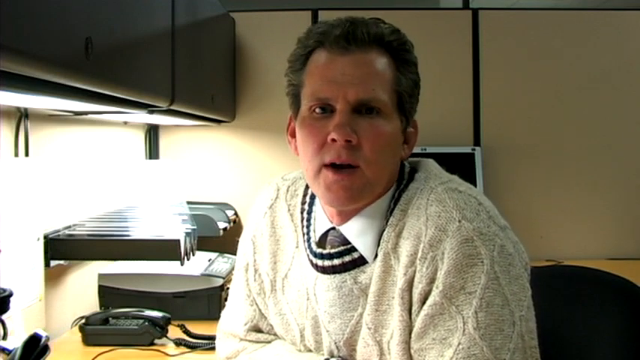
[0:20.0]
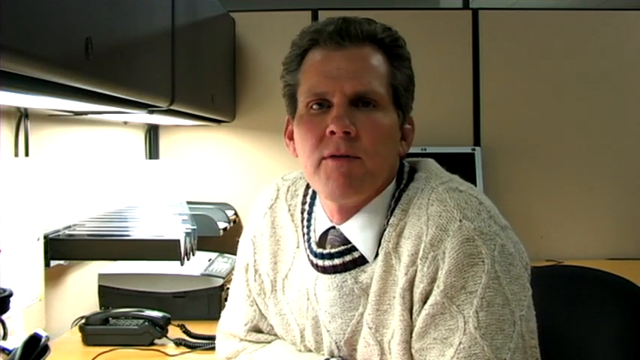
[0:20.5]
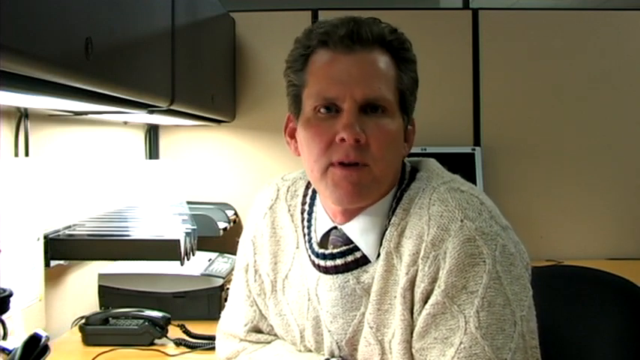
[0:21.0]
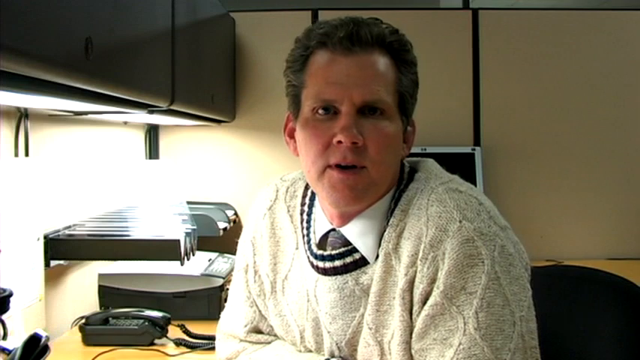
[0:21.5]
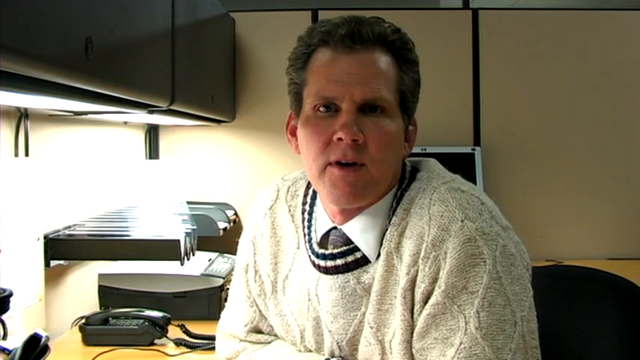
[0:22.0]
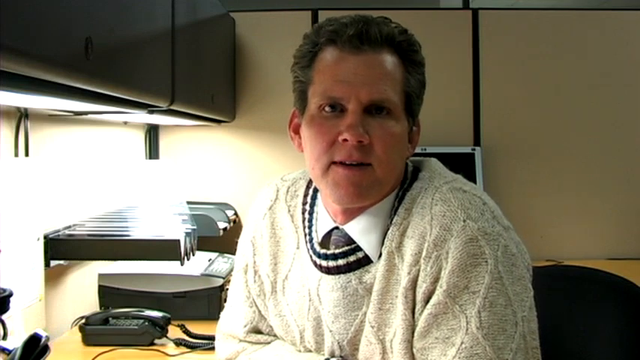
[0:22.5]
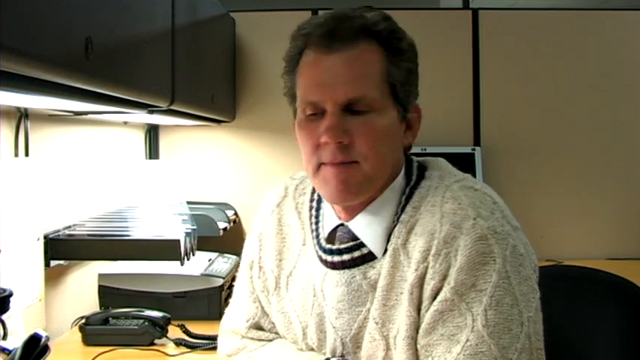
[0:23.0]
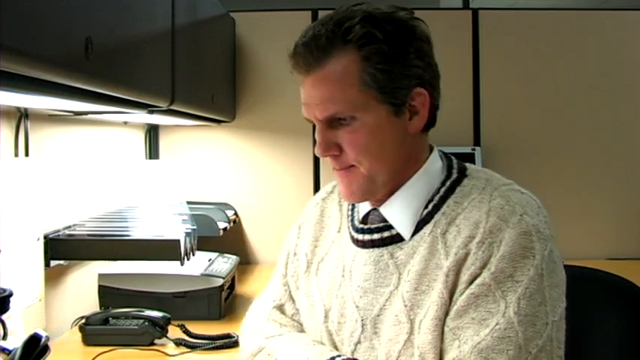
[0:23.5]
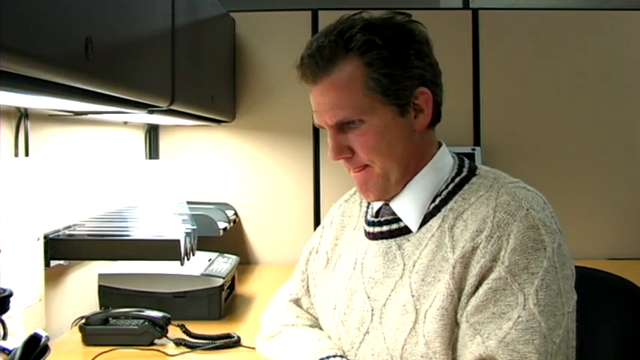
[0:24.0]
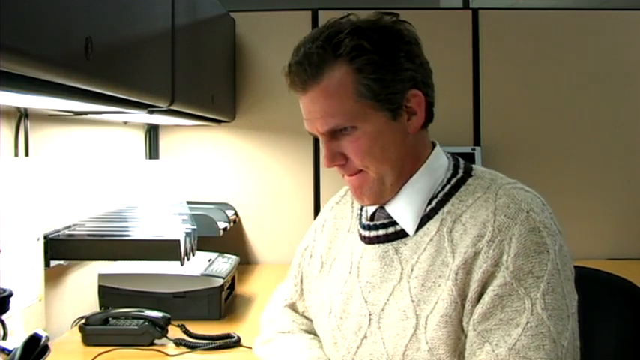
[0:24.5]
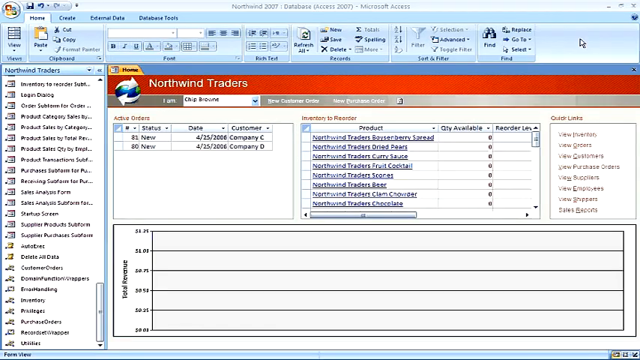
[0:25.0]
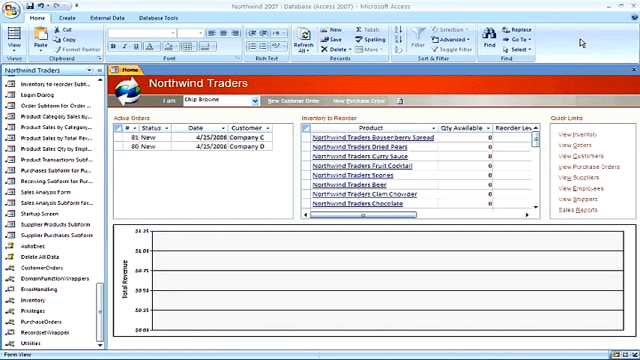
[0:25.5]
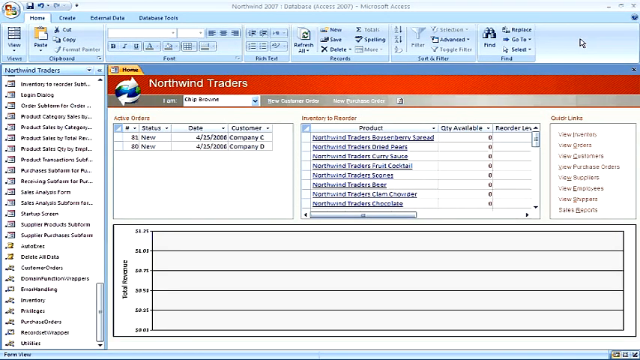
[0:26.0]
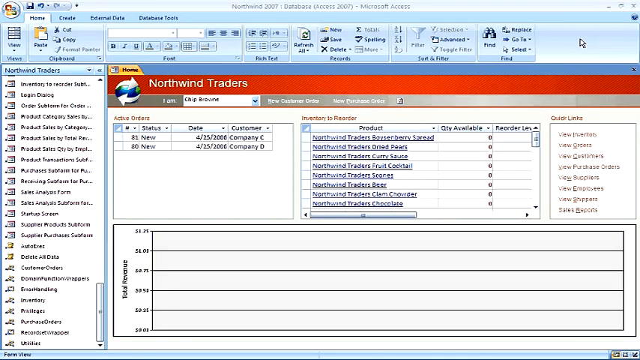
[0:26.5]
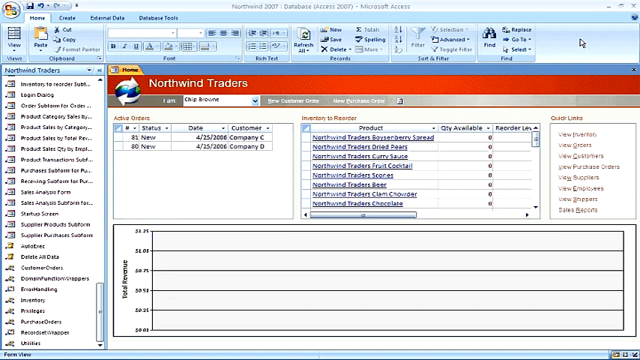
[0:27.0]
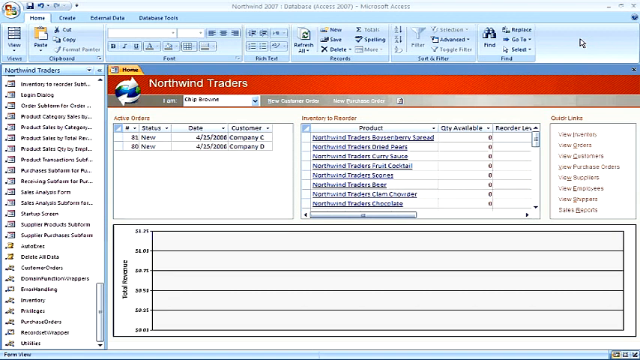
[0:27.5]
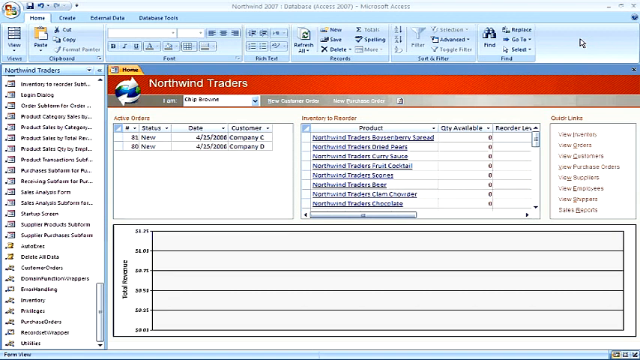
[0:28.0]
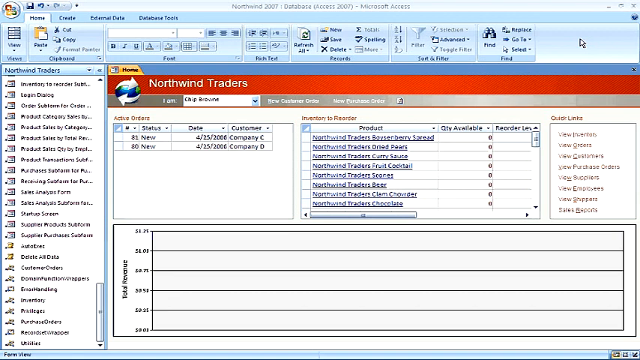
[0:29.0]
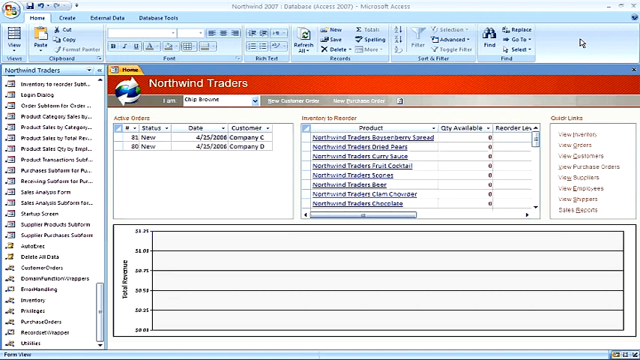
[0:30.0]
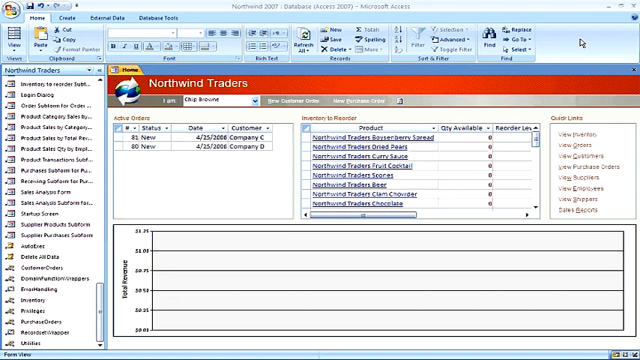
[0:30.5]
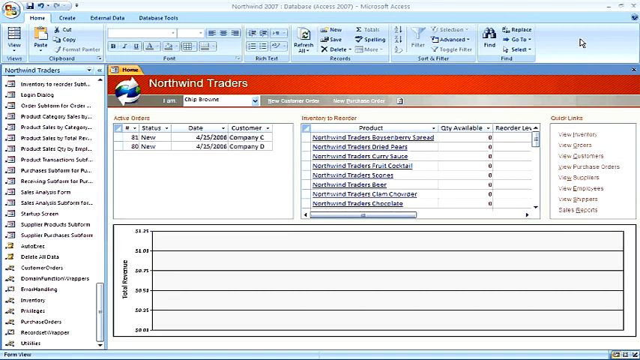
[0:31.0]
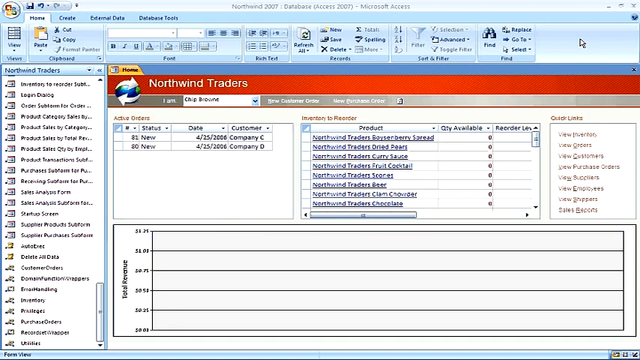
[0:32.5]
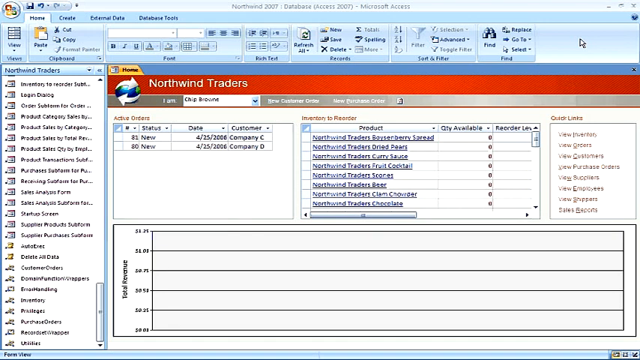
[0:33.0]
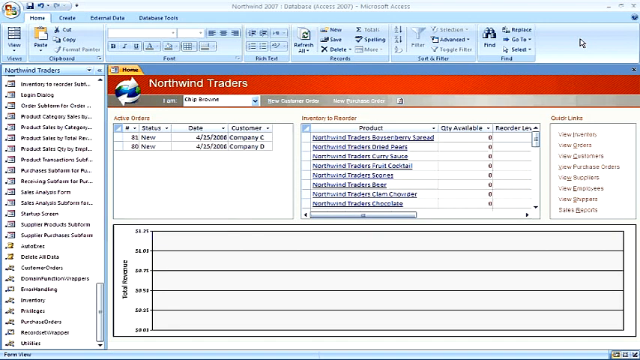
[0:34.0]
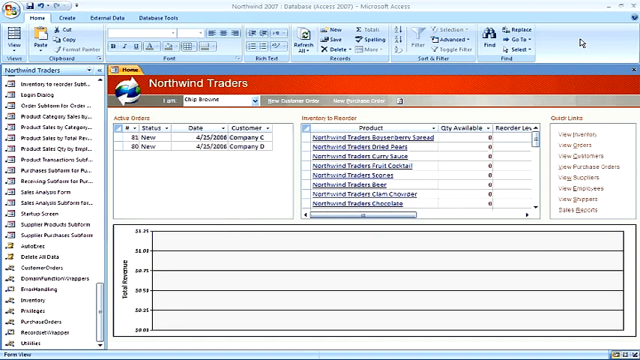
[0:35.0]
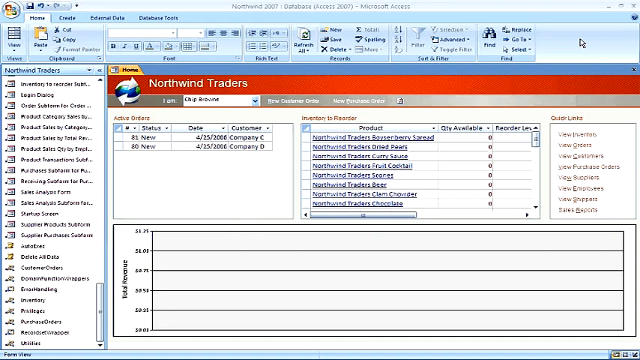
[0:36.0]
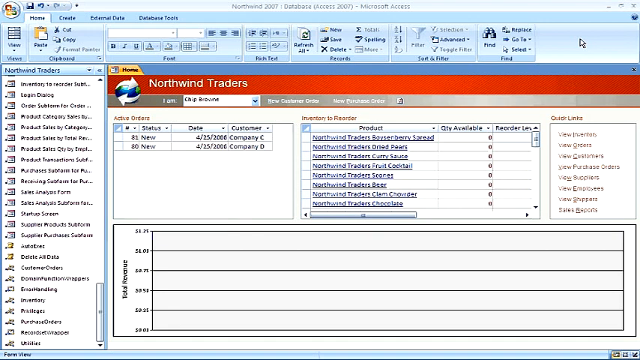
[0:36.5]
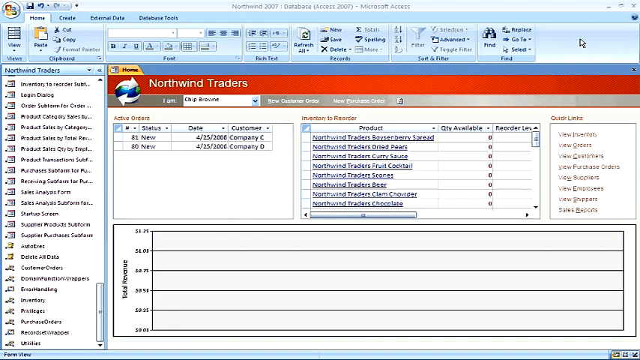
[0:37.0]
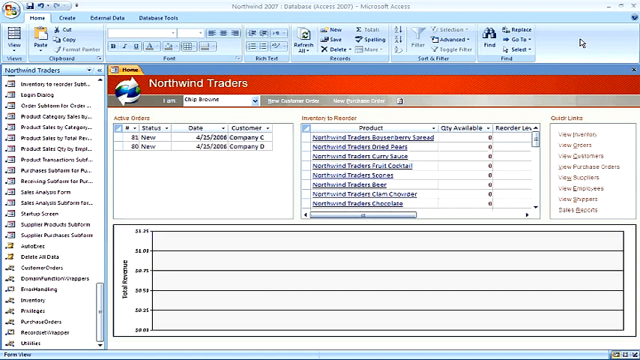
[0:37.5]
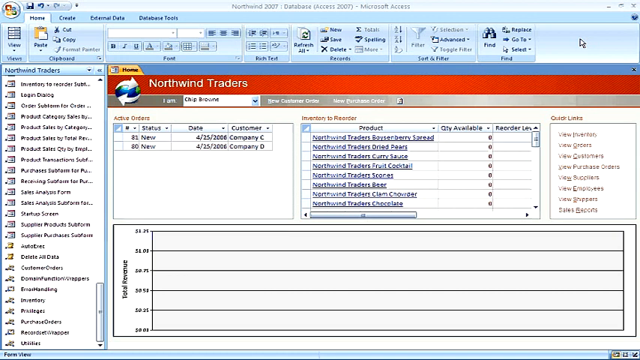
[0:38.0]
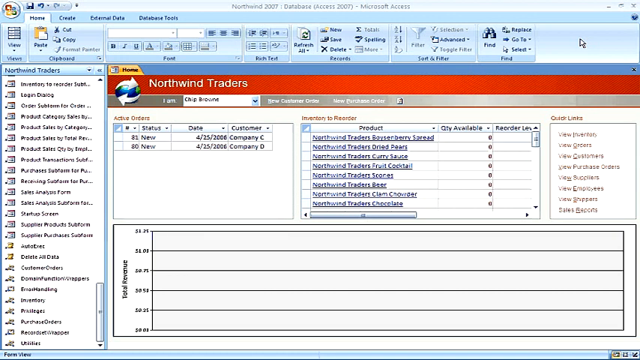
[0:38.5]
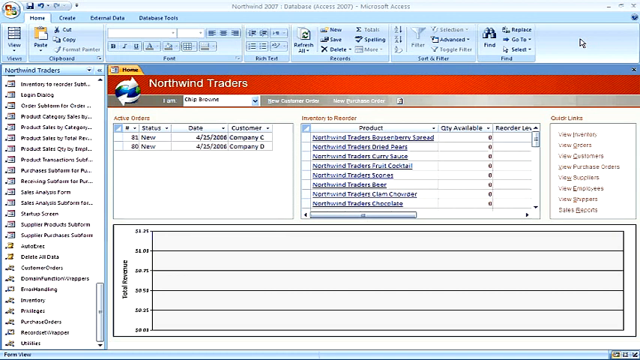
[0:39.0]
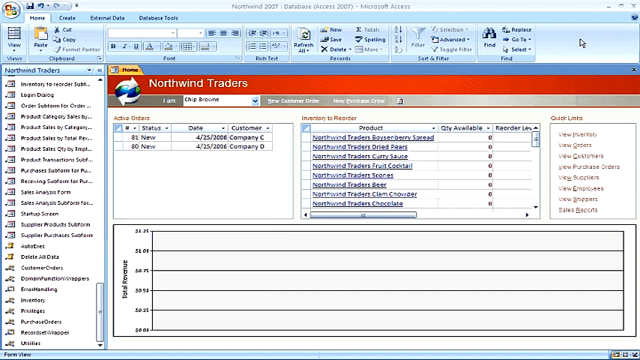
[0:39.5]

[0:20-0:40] The same man, in a collar and tie and chunky sweater, is still seated at an office desk in what looks like an office cubicle, talking to the camera. After some time he looks down at his desk and opens a computer screen, which is then shown instead. The screen says "Northwind Traders", and he seems to be demonstrating some software related to this company. The bar at the top of the screen shows it is a page in Microsoft Access, with logos, buttons and controls that look somewhat old-fashioned, and the top reads "Northwind 2007 Database" in Access 2007. The video then cuts back to the man.